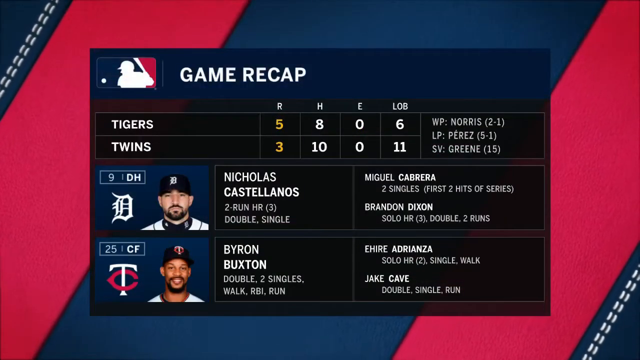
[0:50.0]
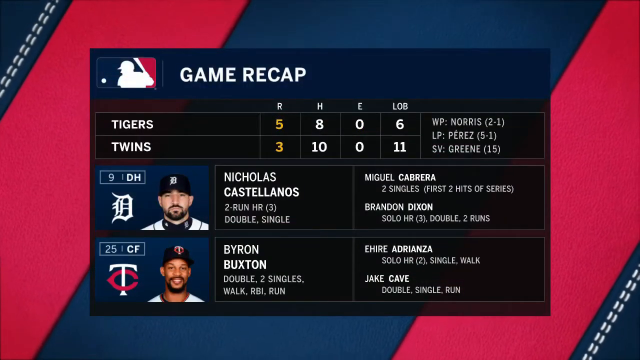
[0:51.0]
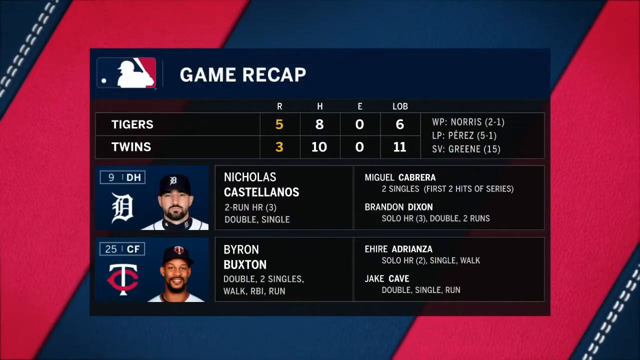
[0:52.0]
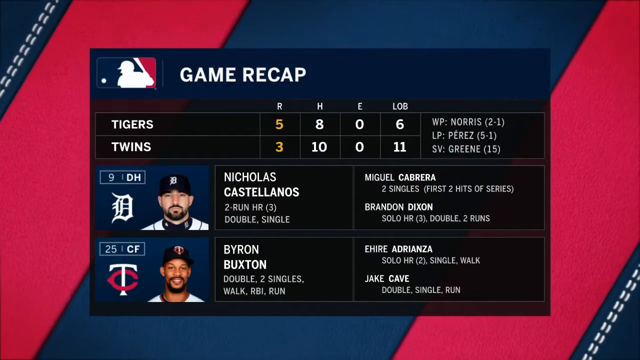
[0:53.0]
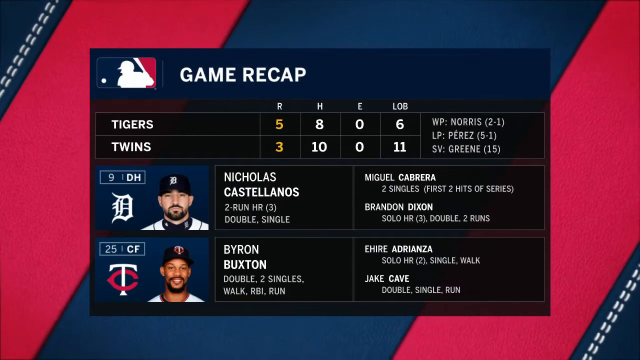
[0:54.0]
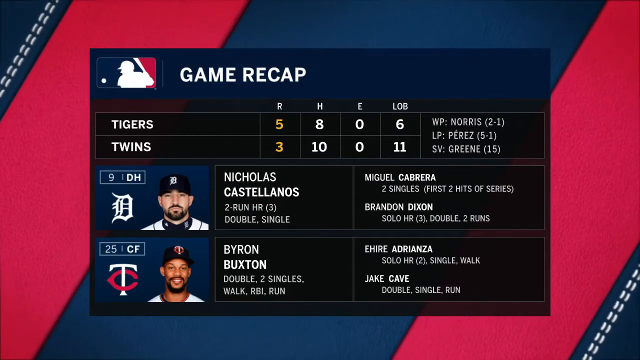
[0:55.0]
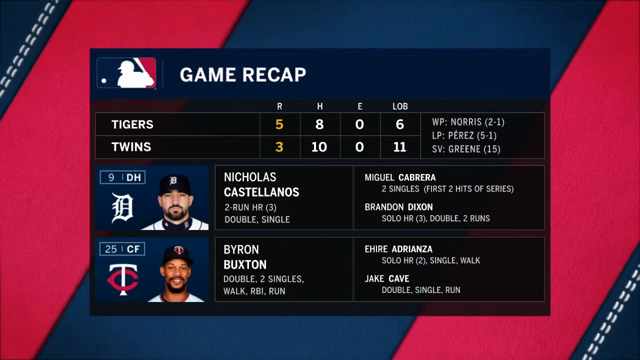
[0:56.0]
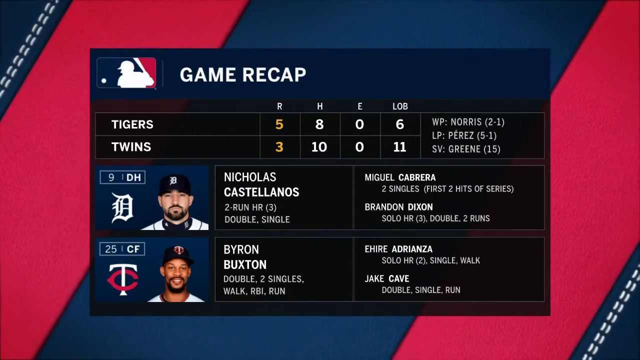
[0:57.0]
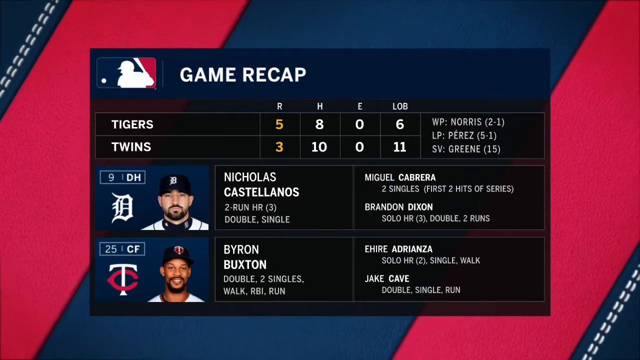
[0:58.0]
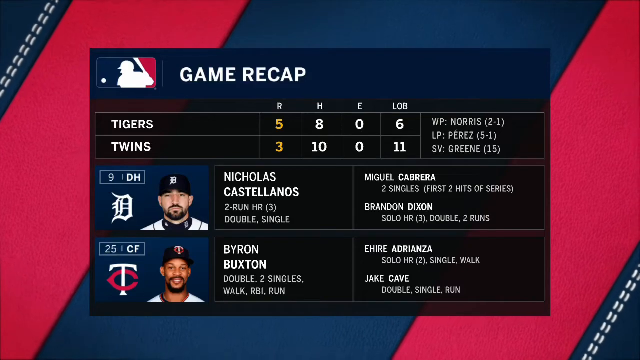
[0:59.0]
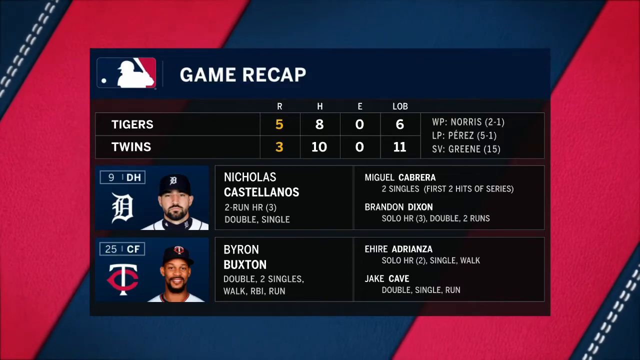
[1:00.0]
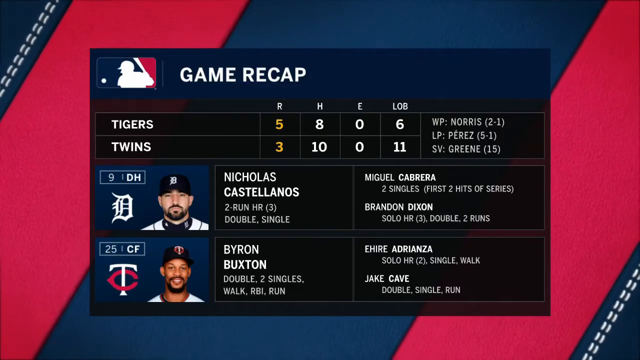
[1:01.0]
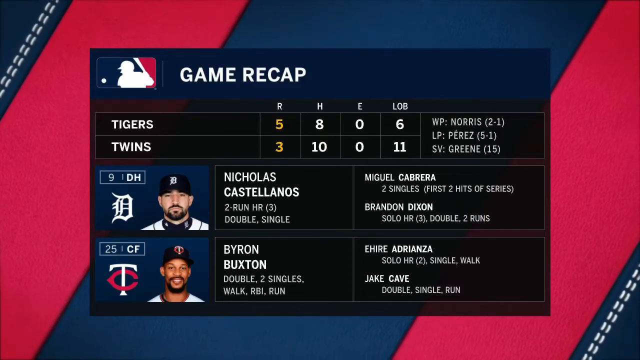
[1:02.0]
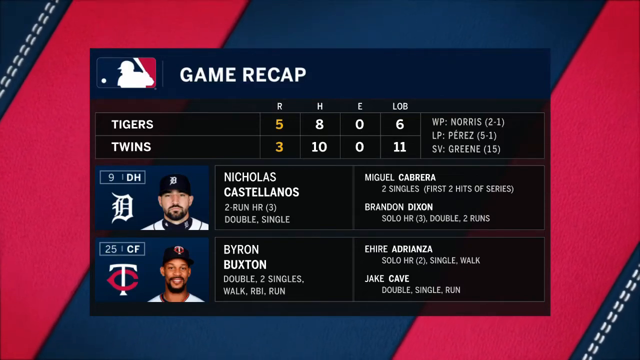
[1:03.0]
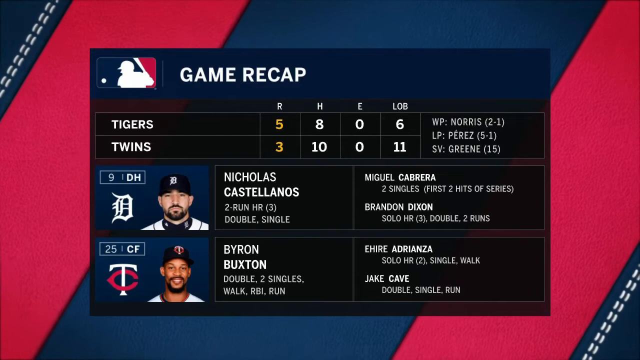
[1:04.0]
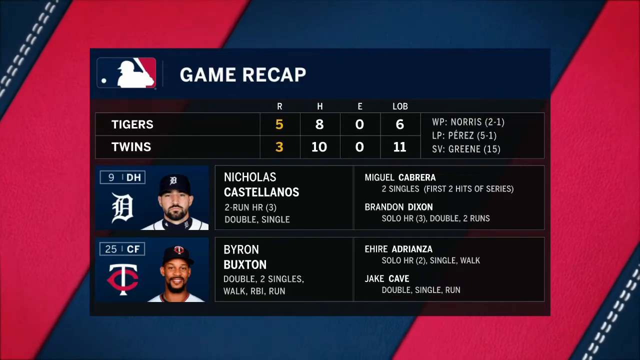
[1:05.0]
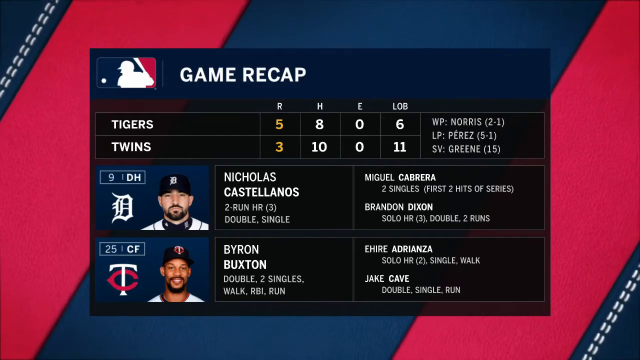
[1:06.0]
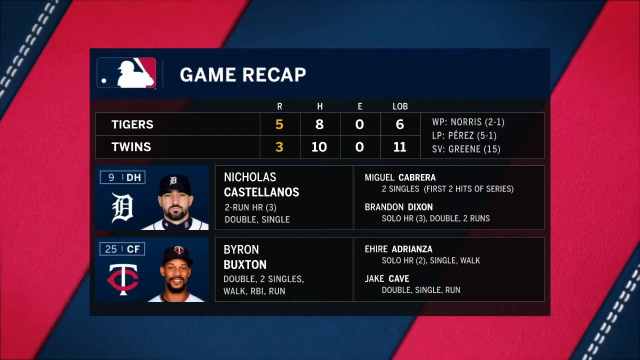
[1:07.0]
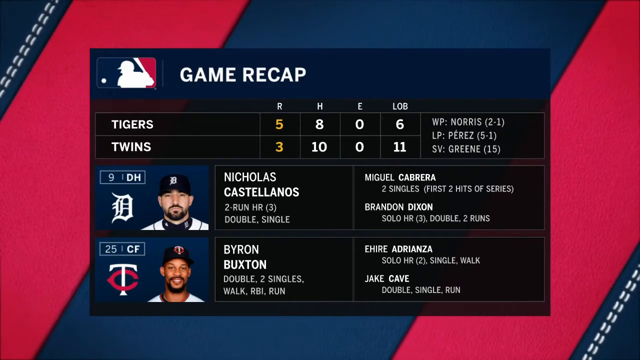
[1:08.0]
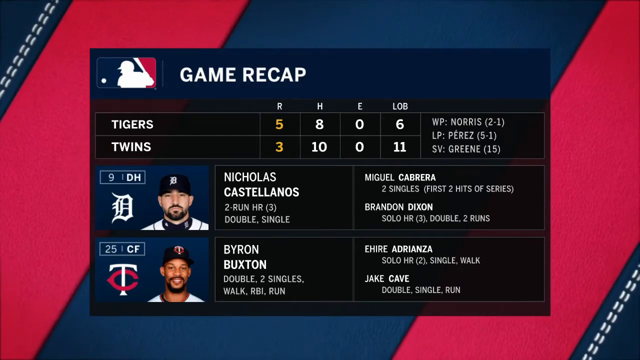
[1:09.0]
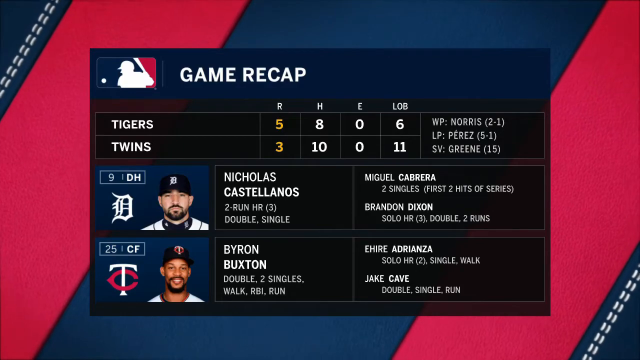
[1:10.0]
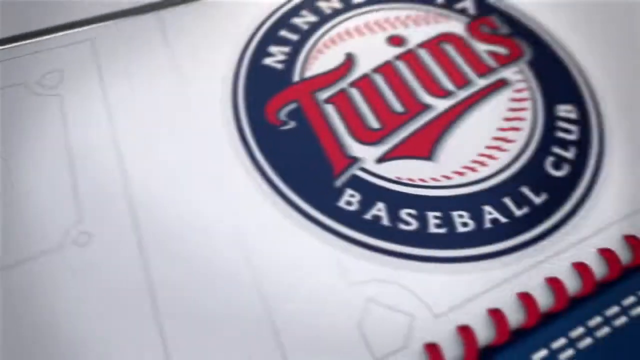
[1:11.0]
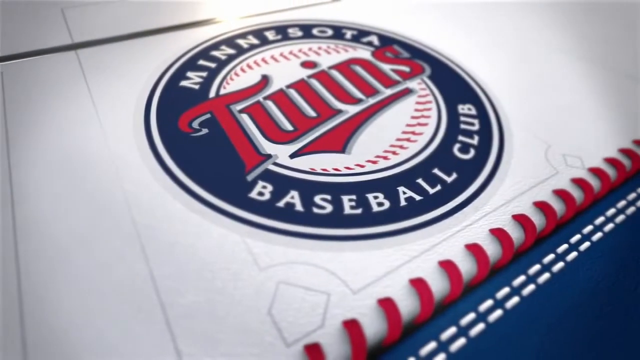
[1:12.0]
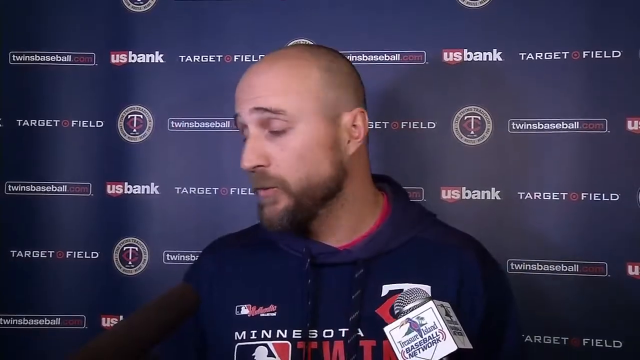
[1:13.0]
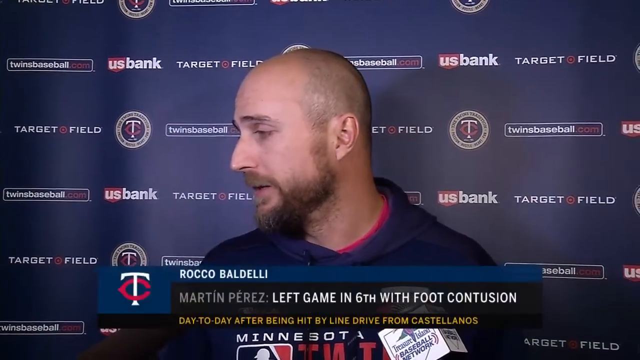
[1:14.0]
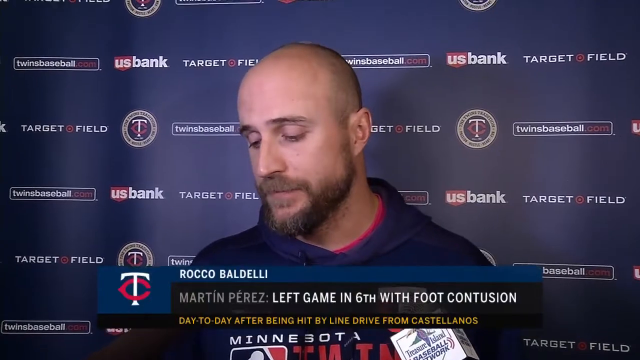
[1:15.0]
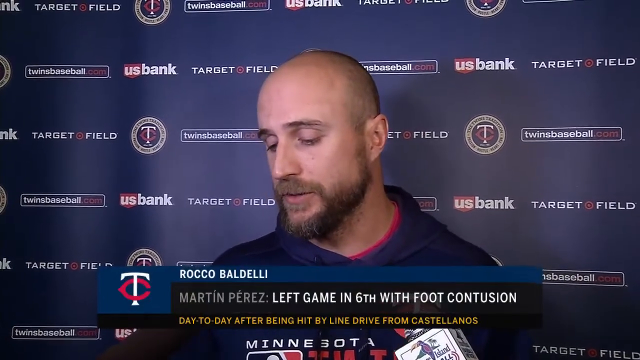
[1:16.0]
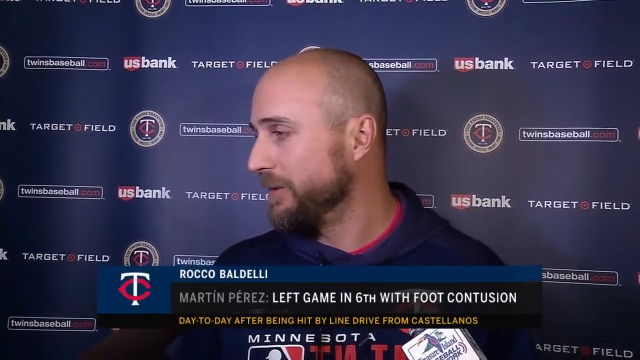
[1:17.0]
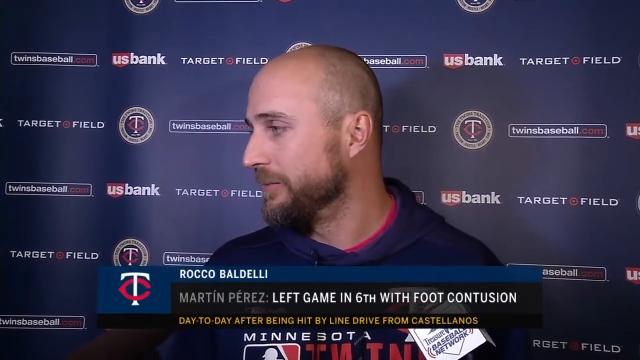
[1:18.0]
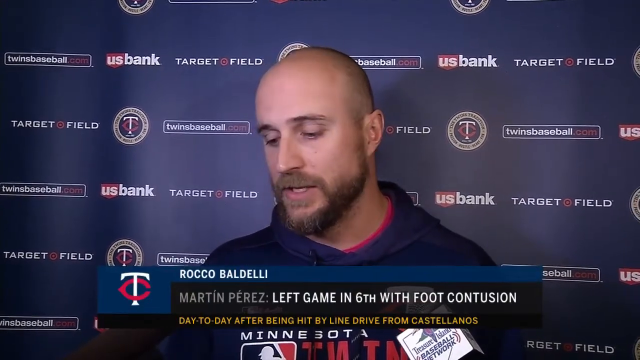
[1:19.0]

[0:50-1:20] A game recap shows the Detroit Tigers beating the Minnesota Twins at Minnesota. Highlights include the Detroit designated hitter, Nicholas Castellanos, hitting a single, a double and a two-run homer, his third of the year. For the Twins, center fielder number 25, Byron Buxton, hit a double and two singles and walked; he knocked a run in and scored a run. The recap stays on the screen while baseball stitching is animated in the upper left and lower right, with red, blue, black and white as the predominant colors. Next, a bearded player for the Twins talks to the press in front of a dark blue wall with advertisements for Twins Baseball, U.S. Bank and Target Field, apparently the name of the Minnesota stadium. The man is identified as Rocco Baldelli. Text states that one player has left the game with a foot contusion, the day after he was hit by a line.